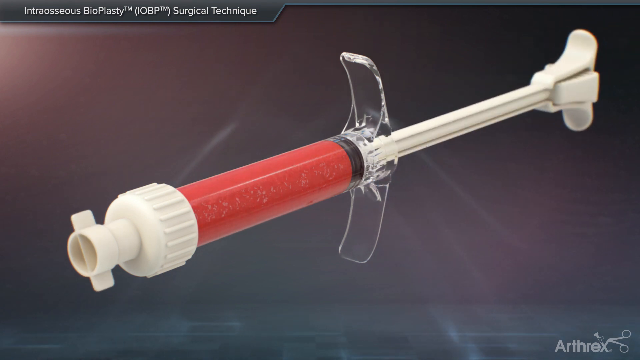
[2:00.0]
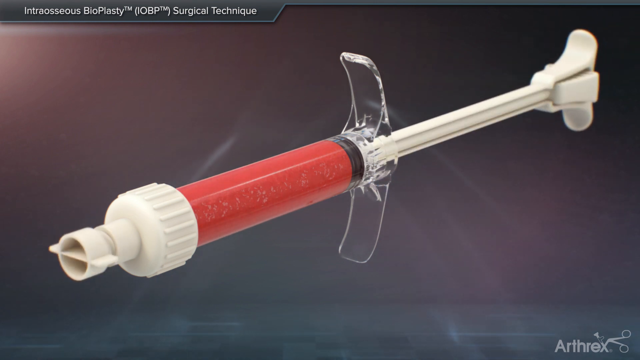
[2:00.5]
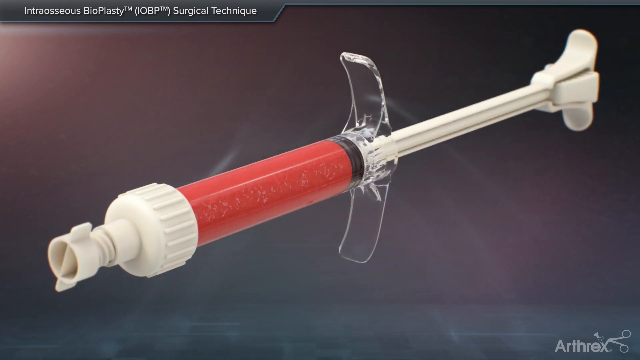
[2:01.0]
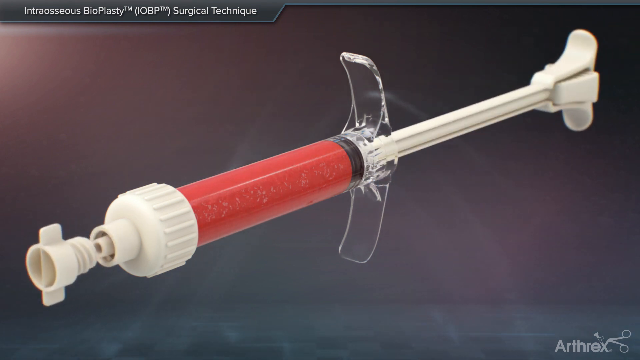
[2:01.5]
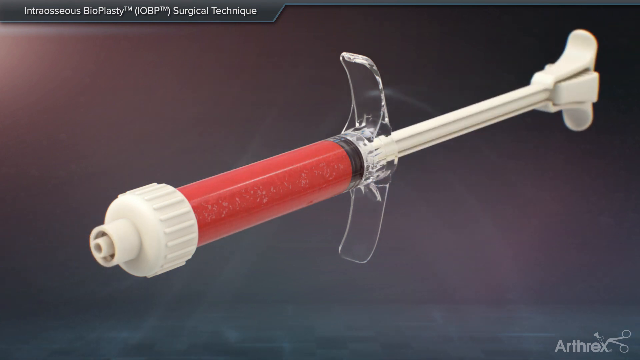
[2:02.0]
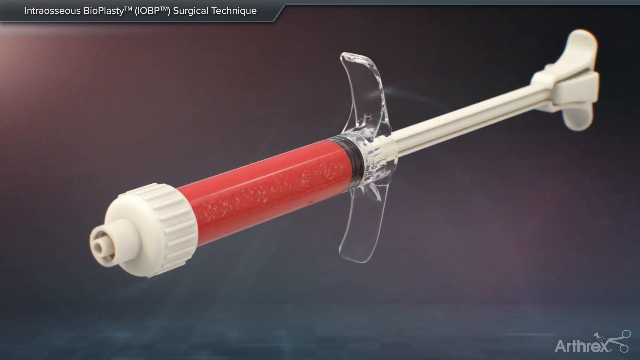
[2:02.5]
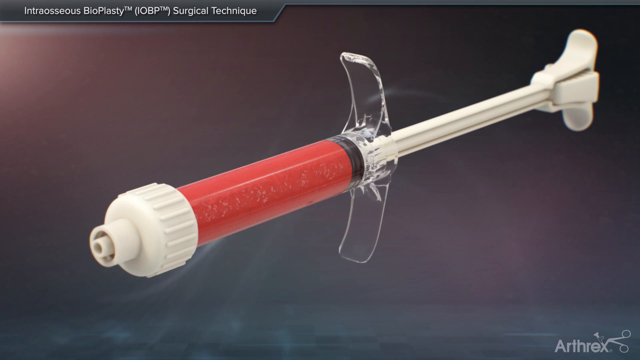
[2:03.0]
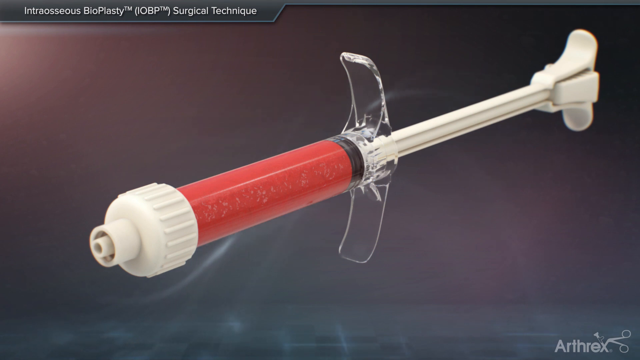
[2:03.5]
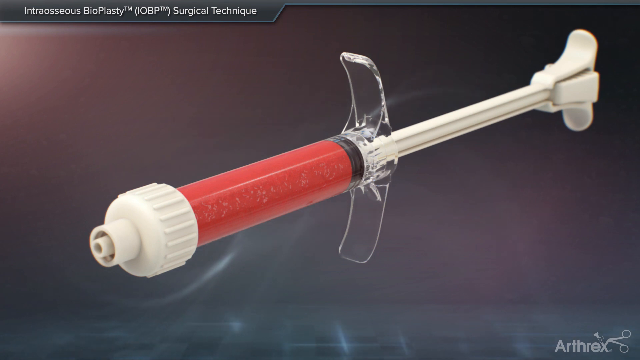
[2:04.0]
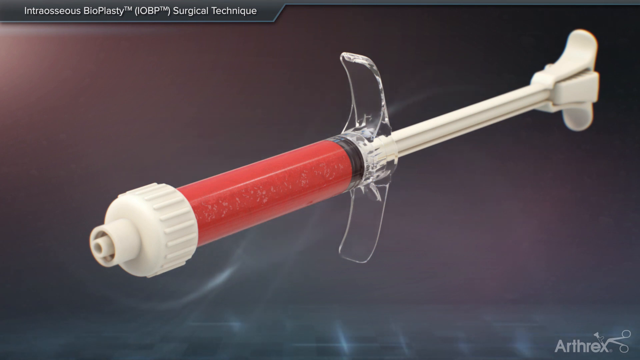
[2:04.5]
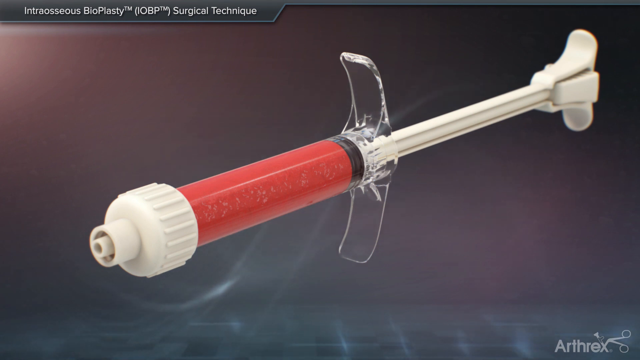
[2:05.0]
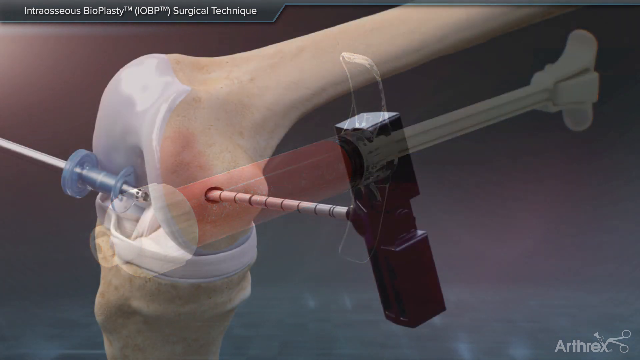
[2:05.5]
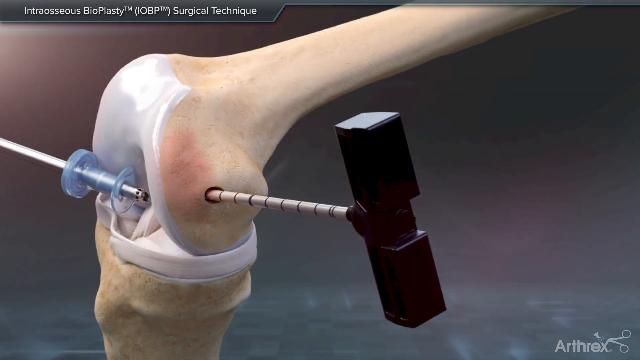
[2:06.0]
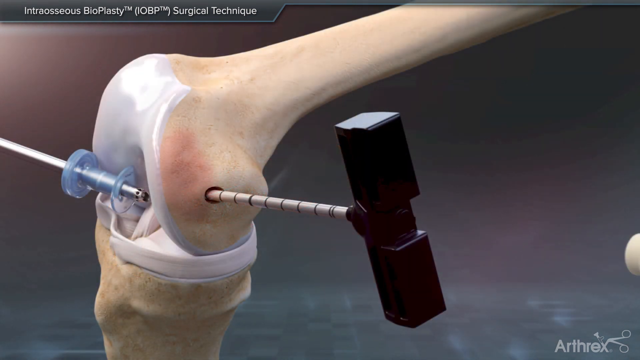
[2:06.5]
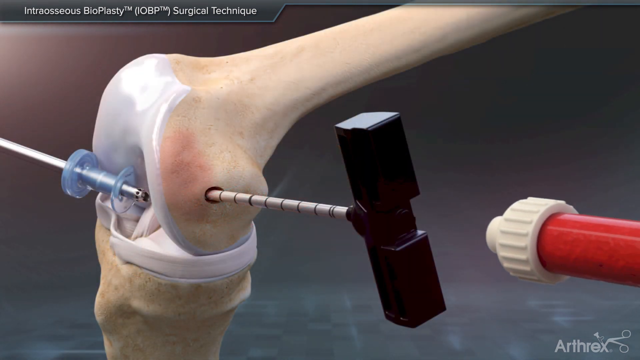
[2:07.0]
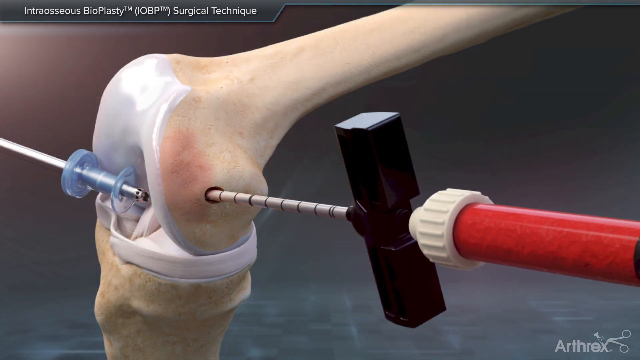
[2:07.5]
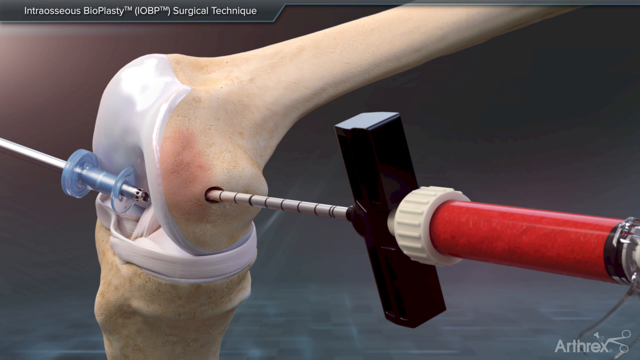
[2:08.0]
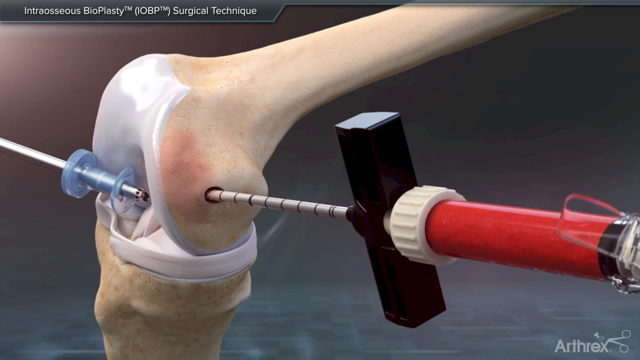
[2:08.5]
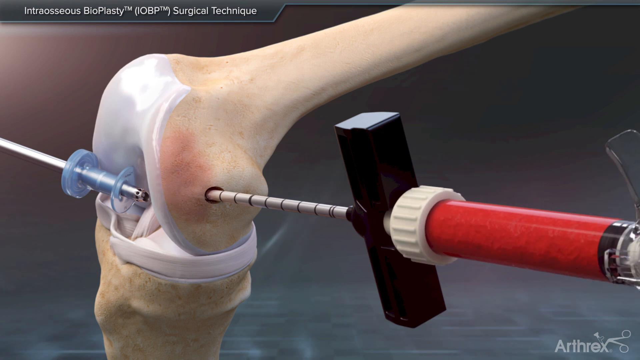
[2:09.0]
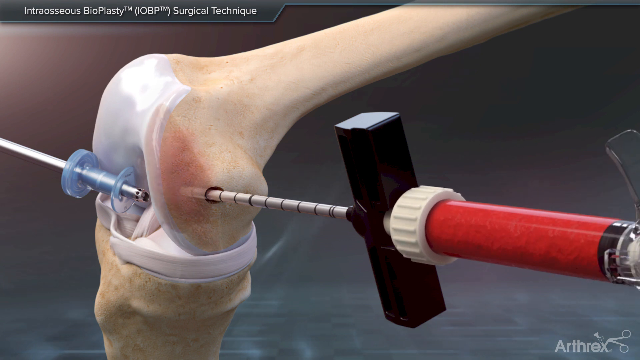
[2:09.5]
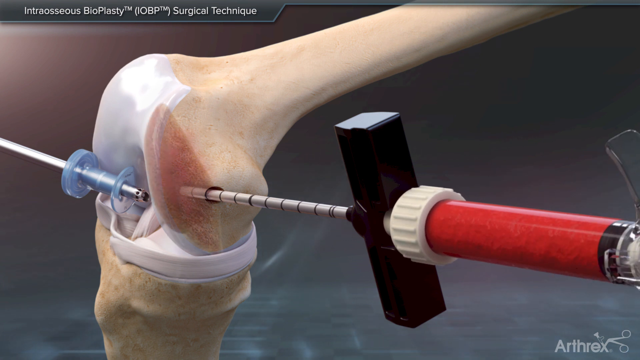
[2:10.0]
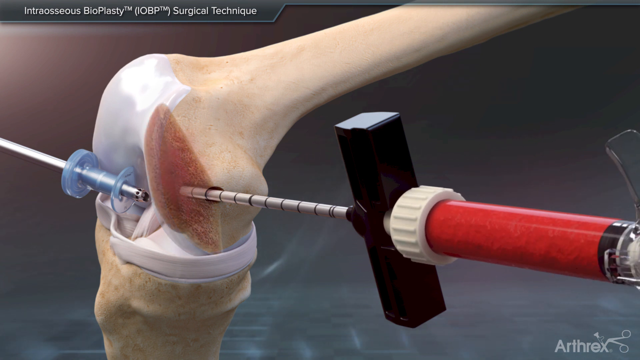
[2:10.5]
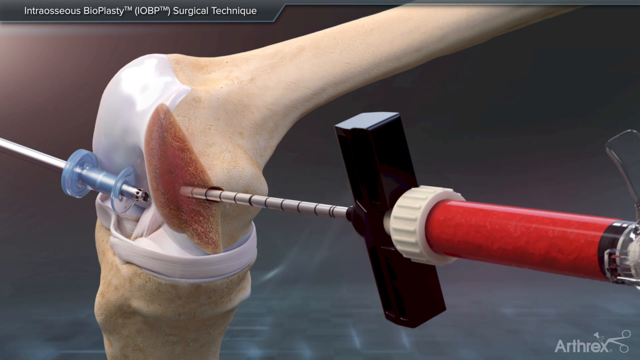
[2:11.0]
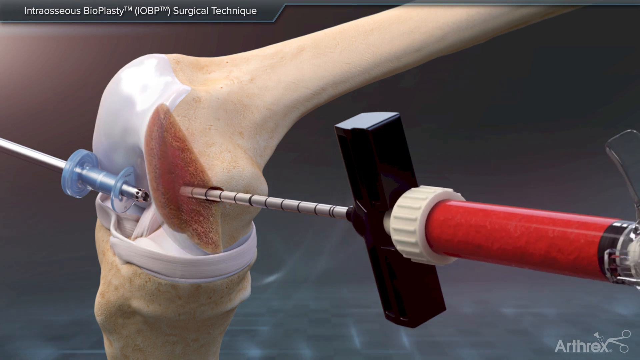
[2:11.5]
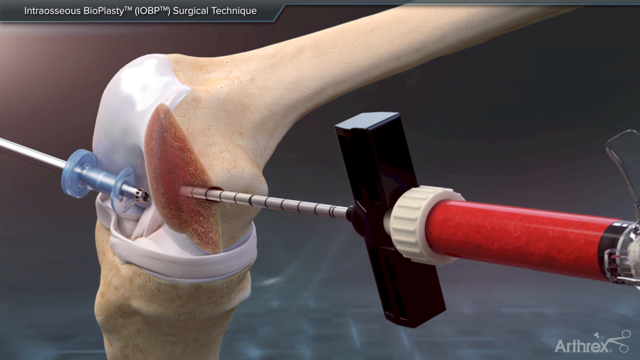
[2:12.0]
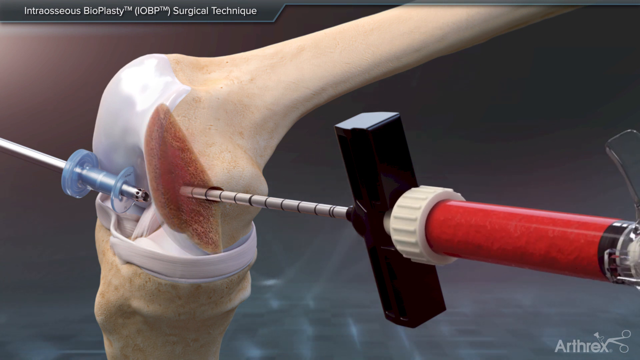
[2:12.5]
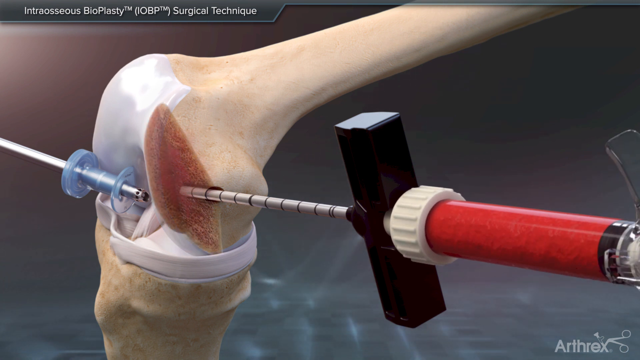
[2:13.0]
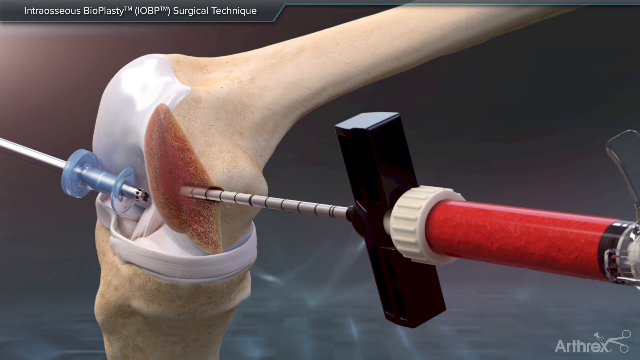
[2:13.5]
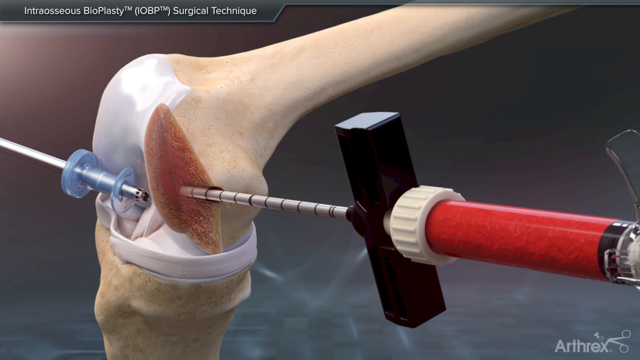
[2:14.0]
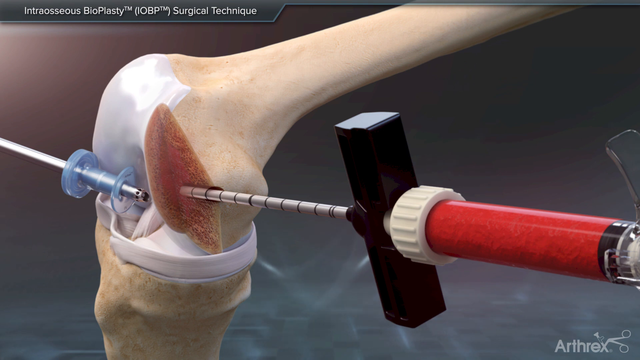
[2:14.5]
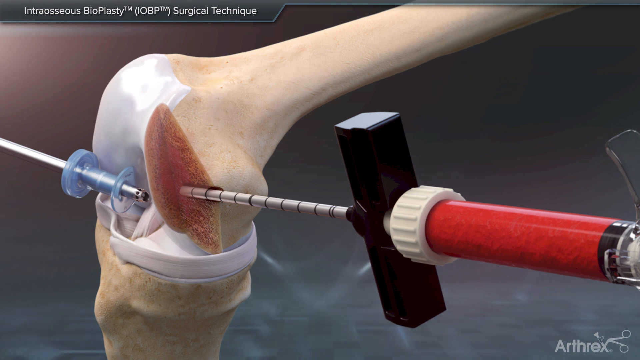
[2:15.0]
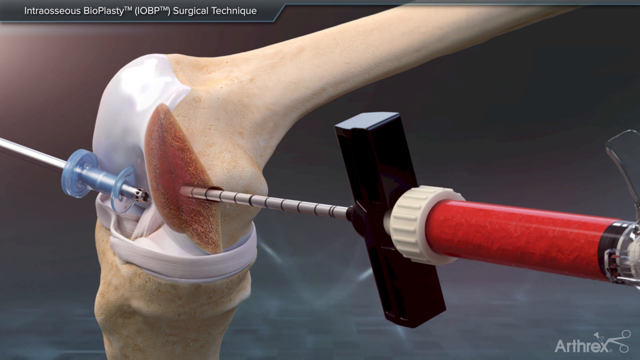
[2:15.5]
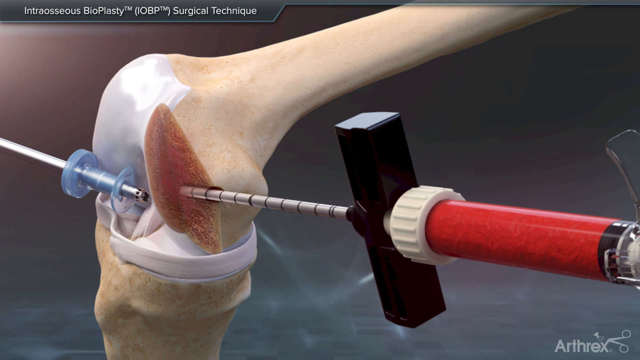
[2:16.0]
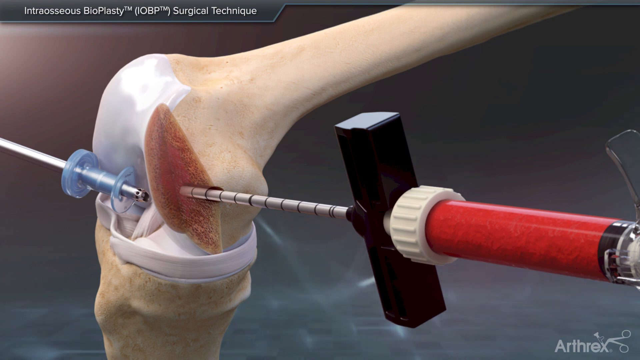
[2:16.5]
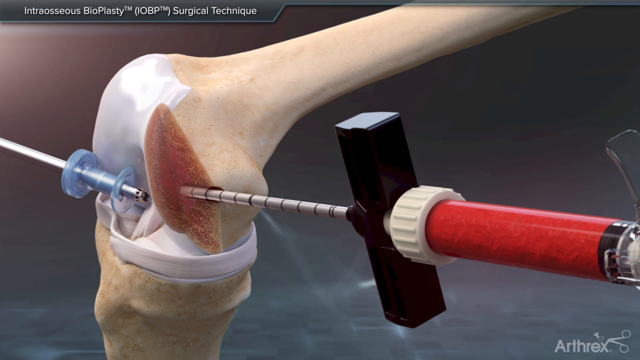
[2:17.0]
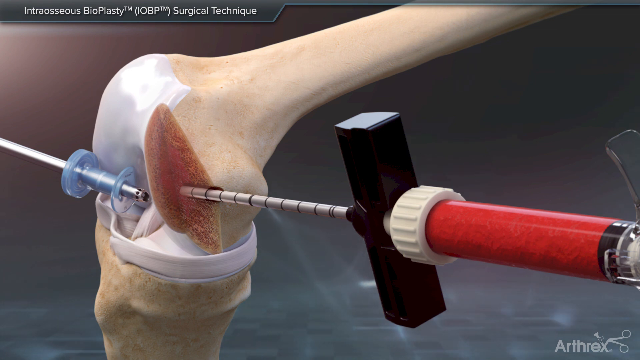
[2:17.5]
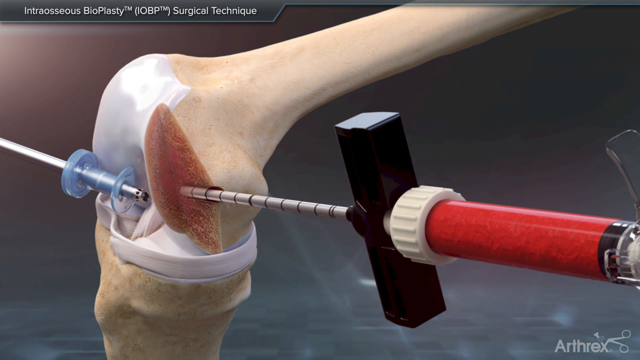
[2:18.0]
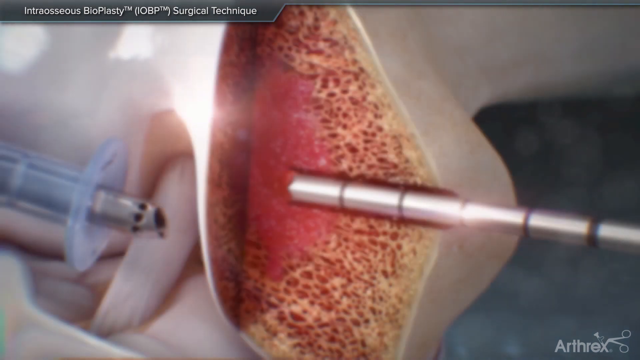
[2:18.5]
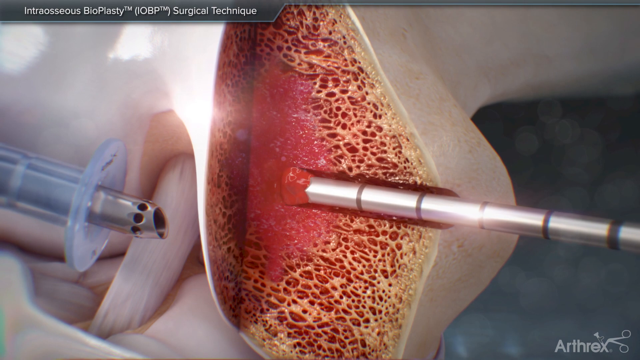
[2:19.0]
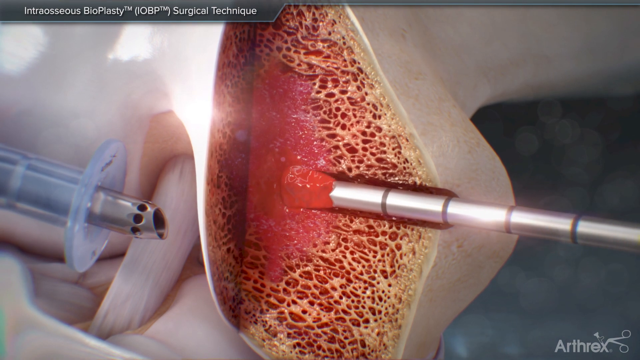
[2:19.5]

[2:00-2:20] The special syringe has a hard, opaque white plastic cap with another piece on the end, and inside are the three mixed fluids: the yellowish orange liquid, the red fluid, presumably blood separated in the Anthrex Angel separator, and the medication pulled from the bottle. The plunger has been depressed three times to mix them. A portion of the small round white plastic end cap is removed, leaving a small hole in the tip. The tip is connected and screwed onto the black clamp on the very large needle depressed into the knee joint. In a close-up, as the very large needle is pulled out from left to right from the hole drilled in the femur, the thigh bone at the knee joint, the fluid is injected into the bone.